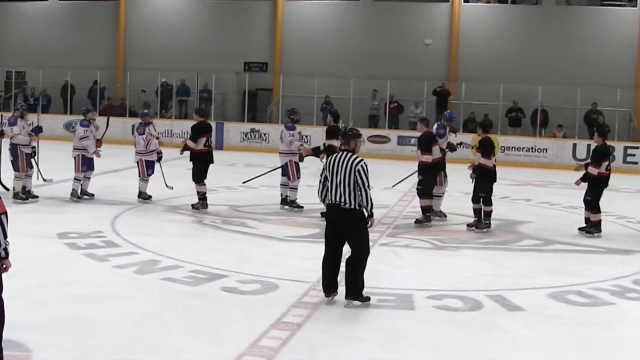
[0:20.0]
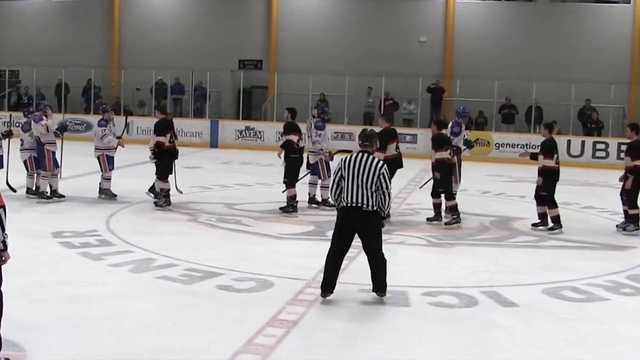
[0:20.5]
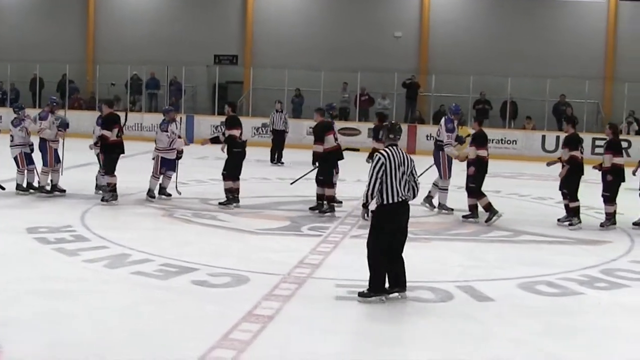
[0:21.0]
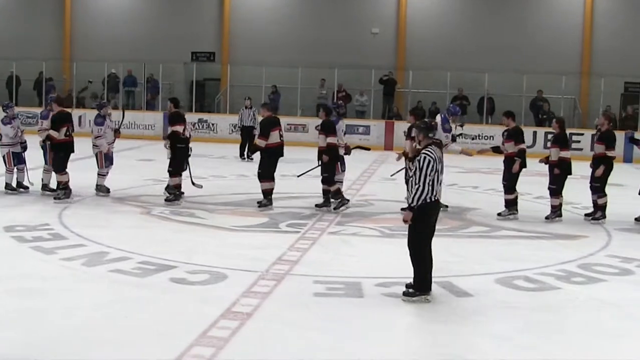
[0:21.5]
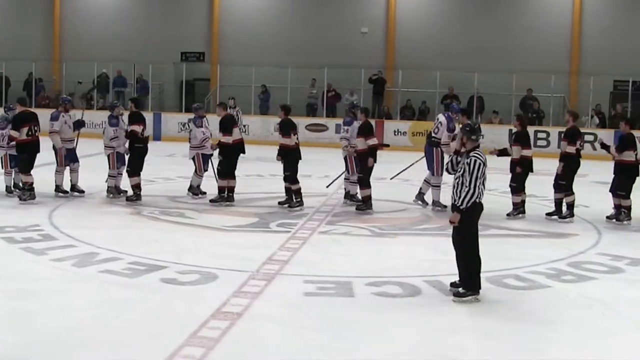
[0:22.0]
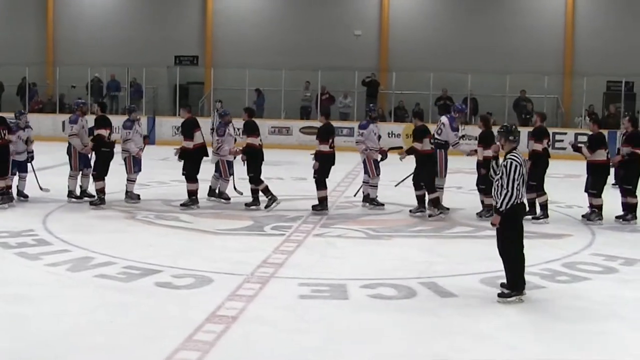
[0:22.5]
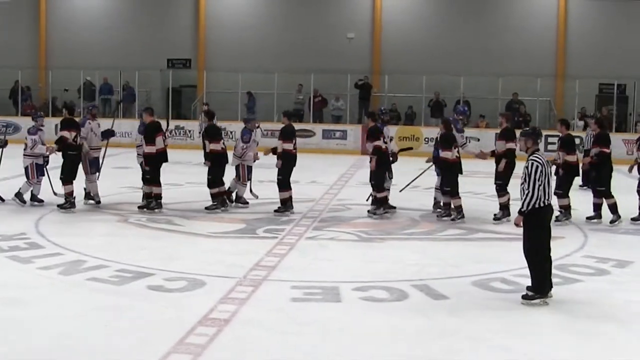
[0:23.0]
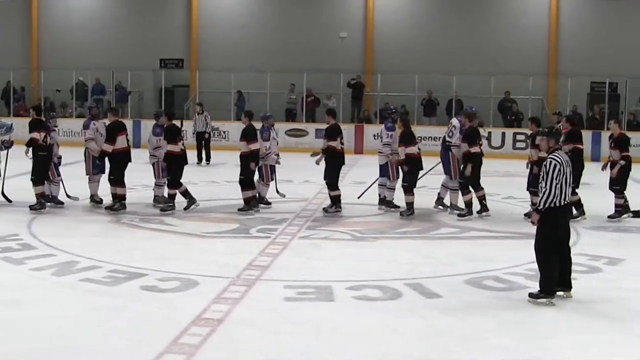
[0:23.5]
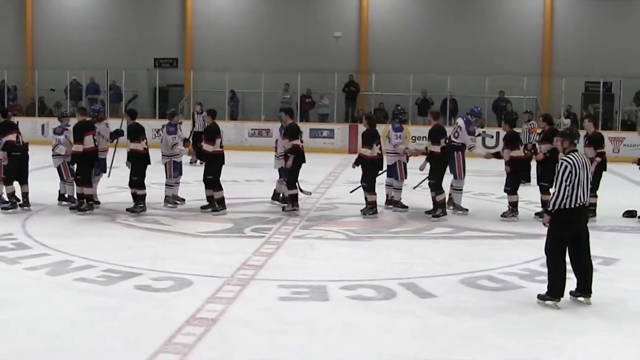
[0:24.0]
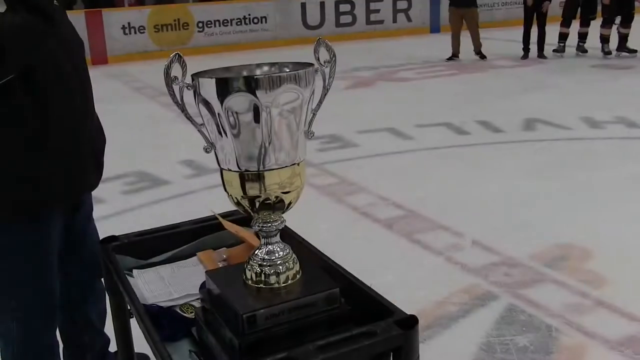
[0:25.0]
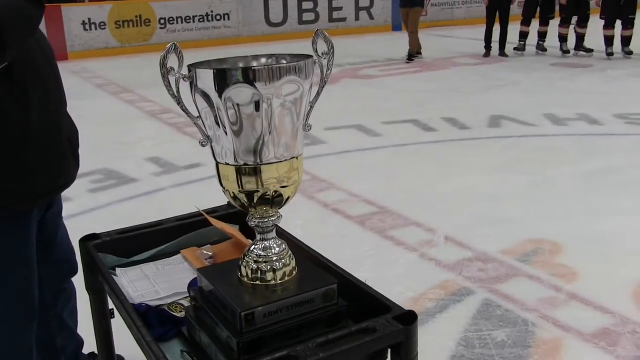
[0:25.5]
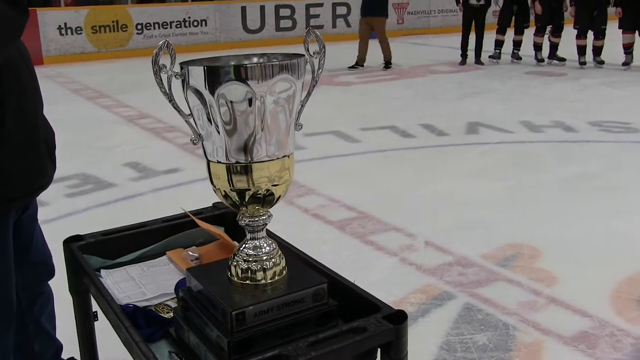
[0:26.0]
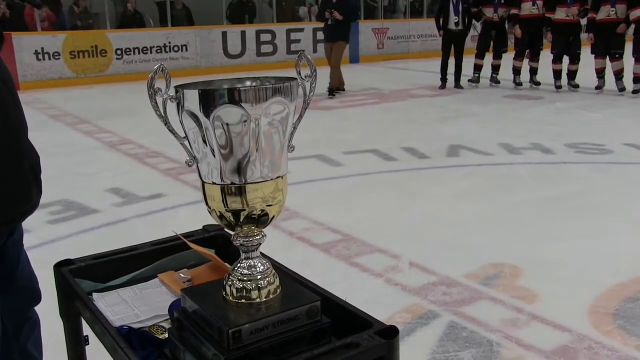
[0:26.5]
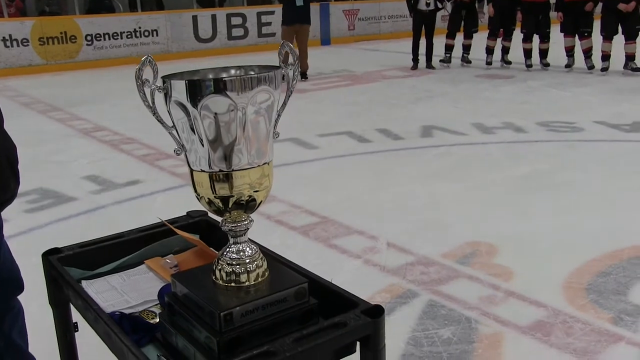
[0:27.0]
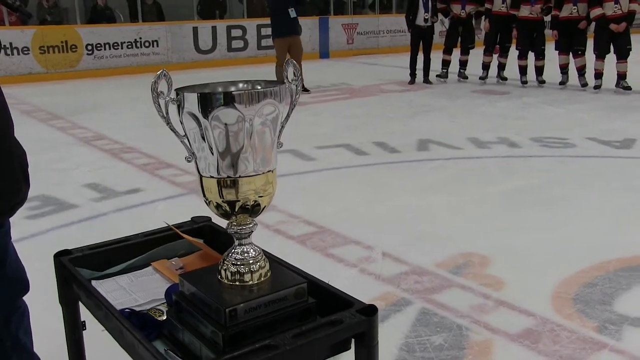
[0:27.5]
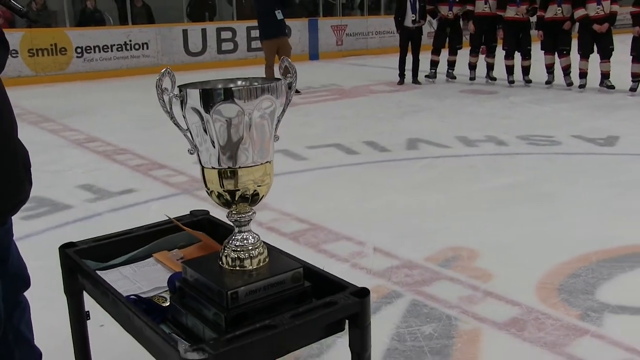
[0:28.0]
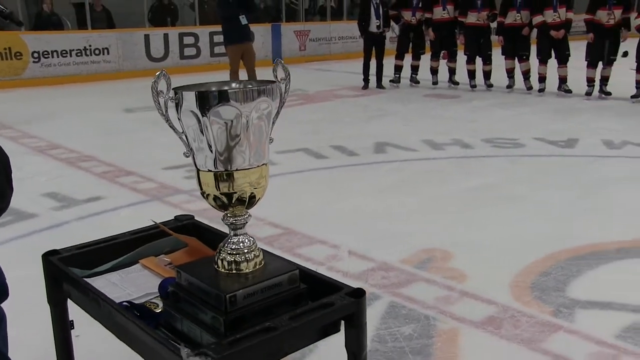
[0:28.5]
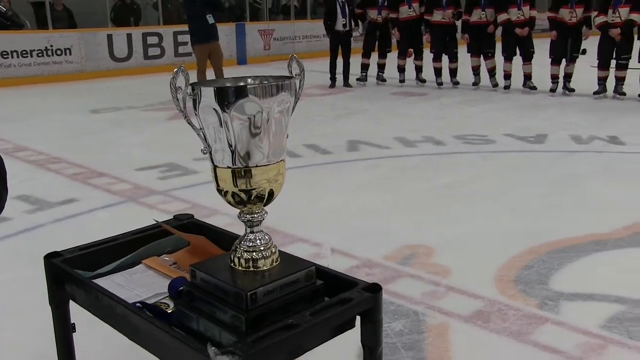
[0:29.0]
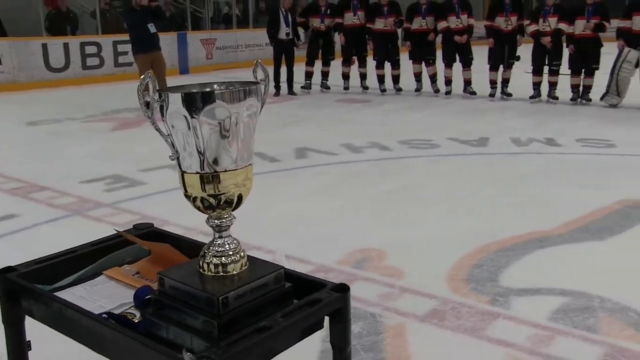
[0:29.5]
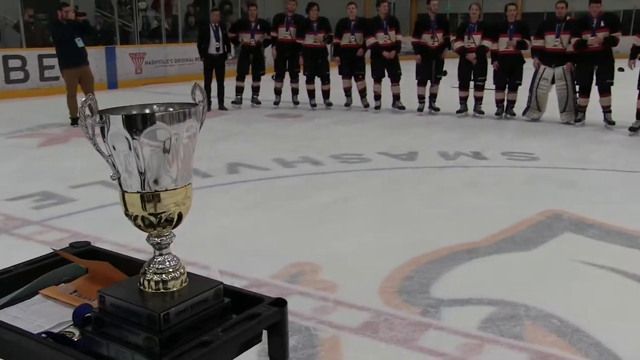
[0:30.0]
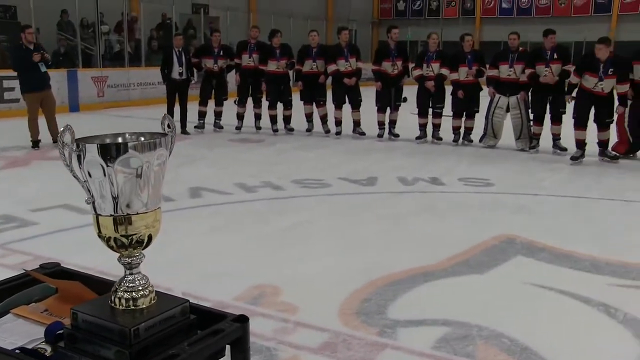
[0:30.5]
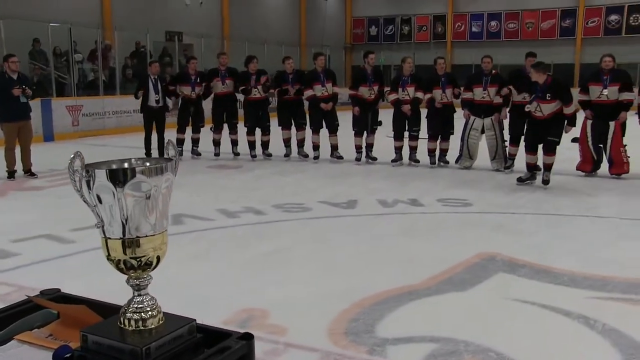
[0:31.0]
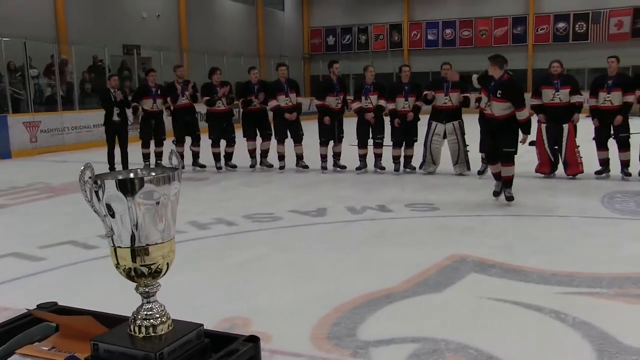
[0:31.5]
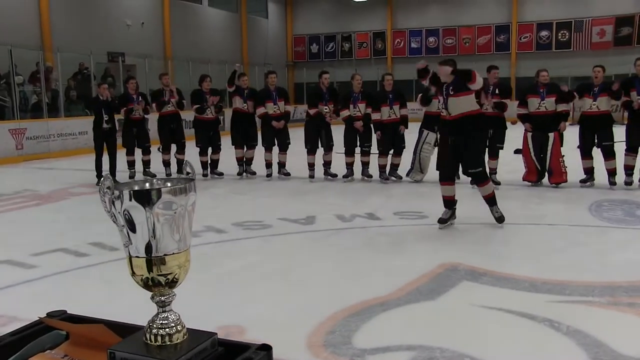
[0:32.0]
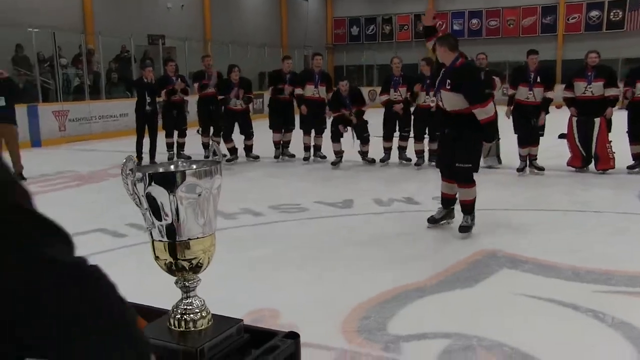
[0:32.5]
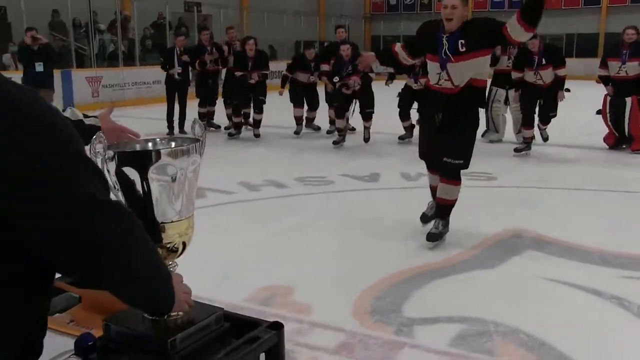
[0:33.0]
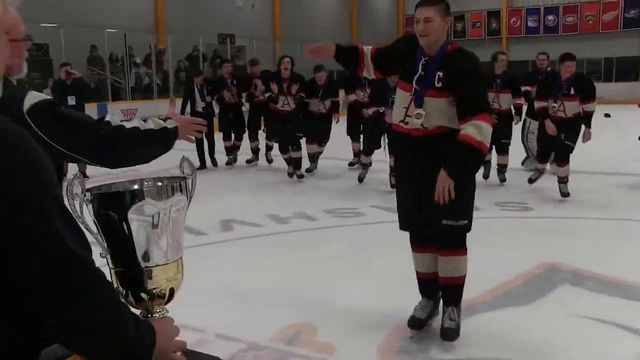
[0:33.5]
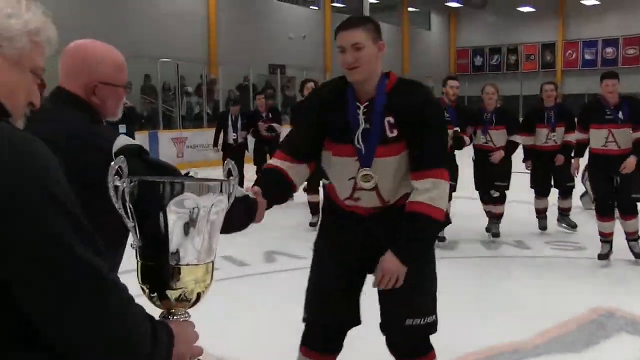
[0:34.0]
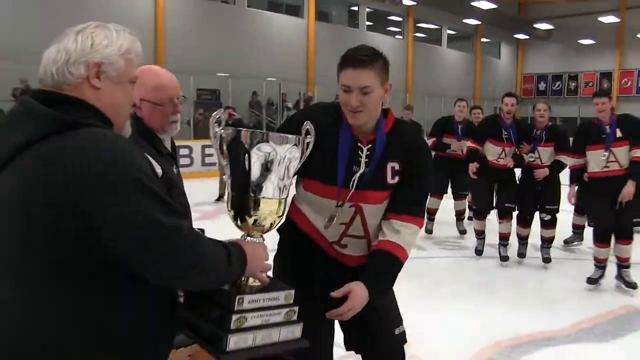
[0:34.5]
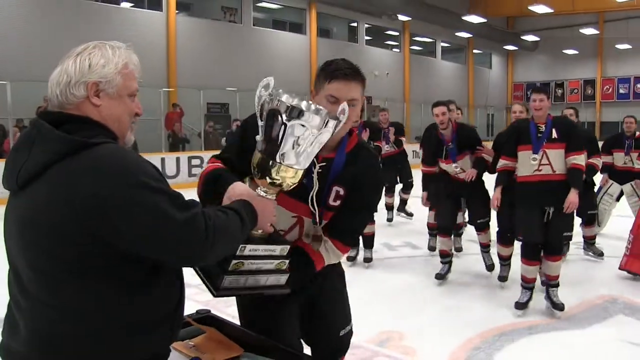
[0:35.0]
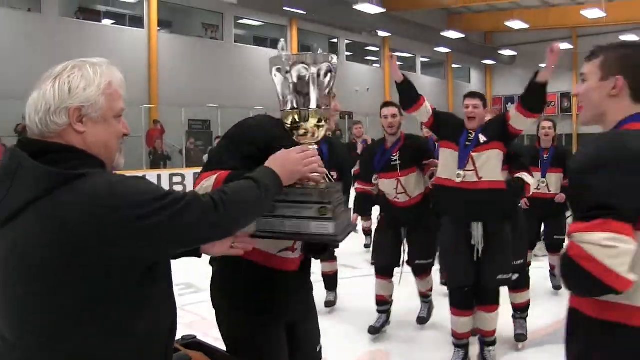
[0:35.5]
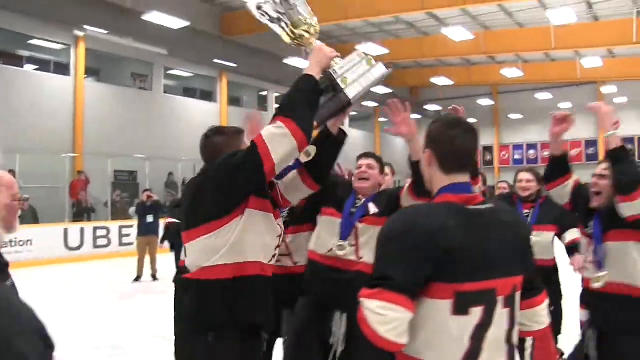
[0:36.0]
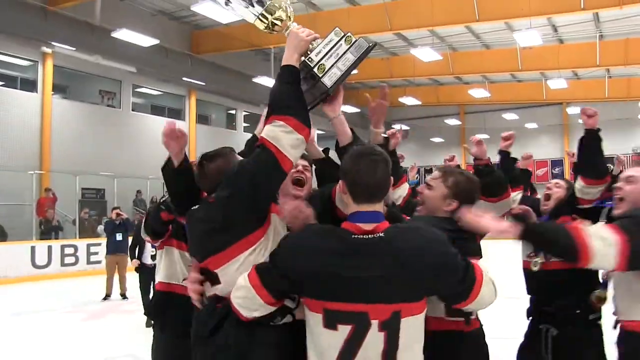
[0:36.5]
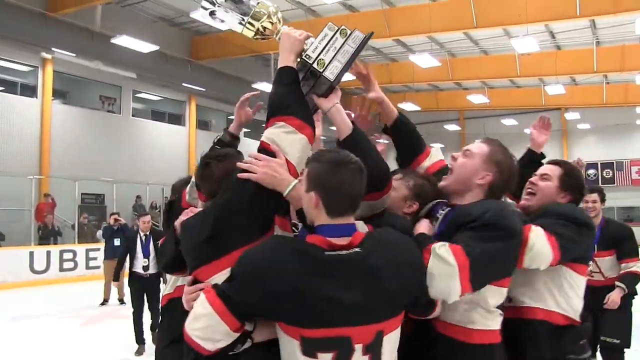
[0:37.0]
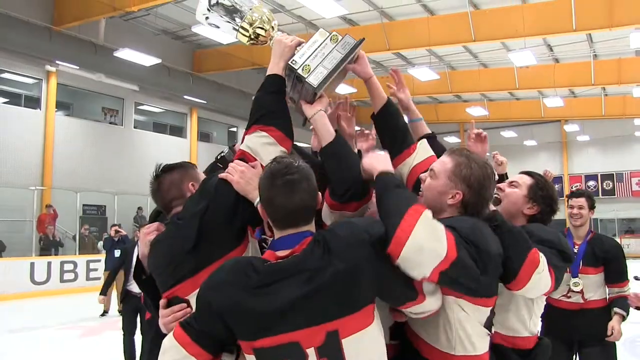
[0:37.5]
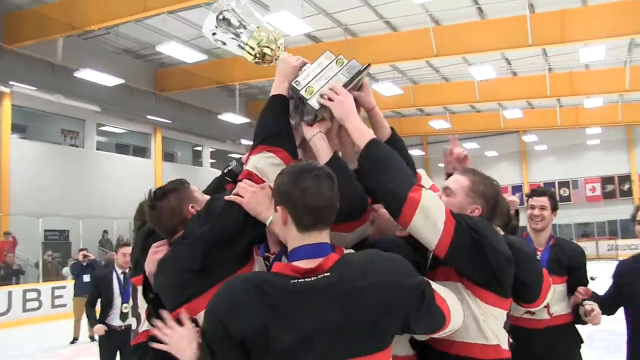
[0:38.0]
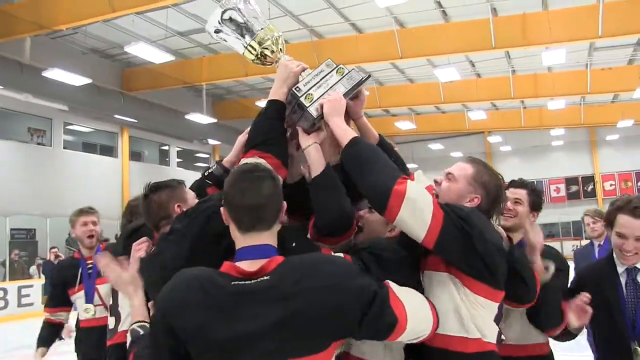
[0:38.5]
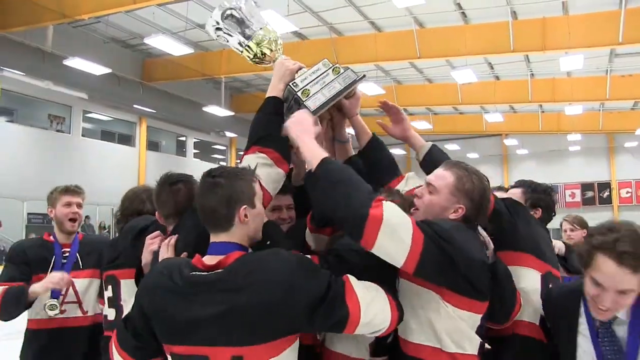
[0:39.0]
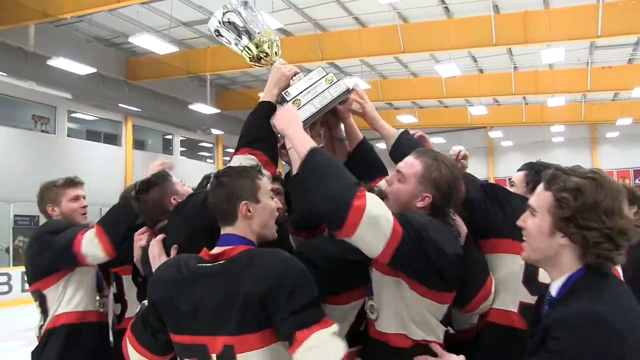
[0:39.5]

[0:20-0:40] The two opposing hockey teams come together and shake hands on the ice, skating as they do so. They form two lines that skate toward each other in opposite directions, each player shaking hands one by one as they pass. Then they hold up a golden trophy. At an entrance there is a dark barrier with lights at its top that illuminate the arena at that entrance.